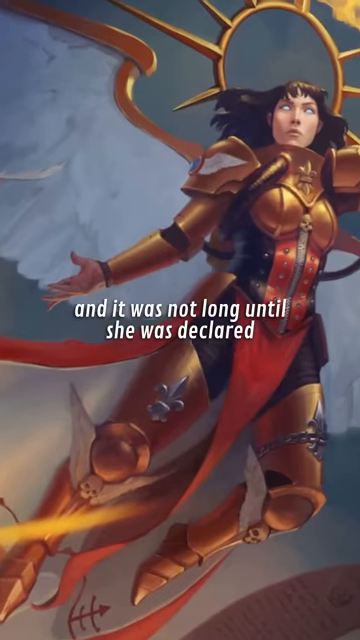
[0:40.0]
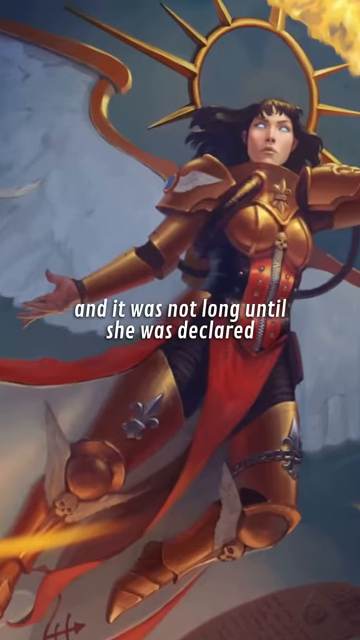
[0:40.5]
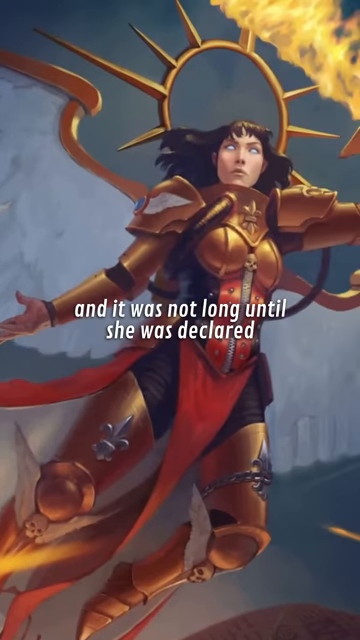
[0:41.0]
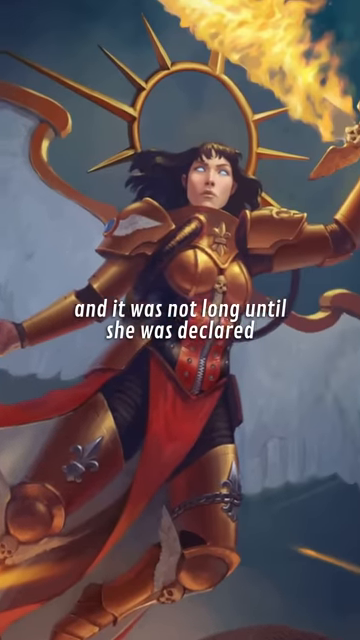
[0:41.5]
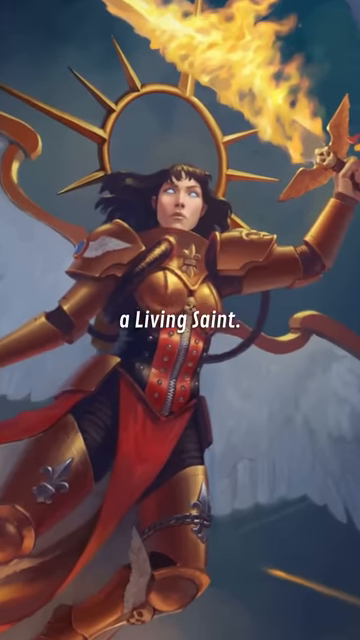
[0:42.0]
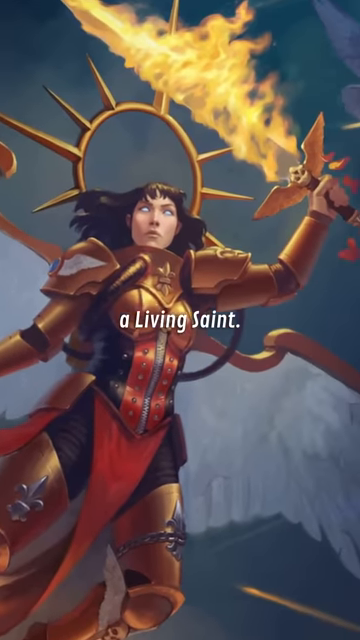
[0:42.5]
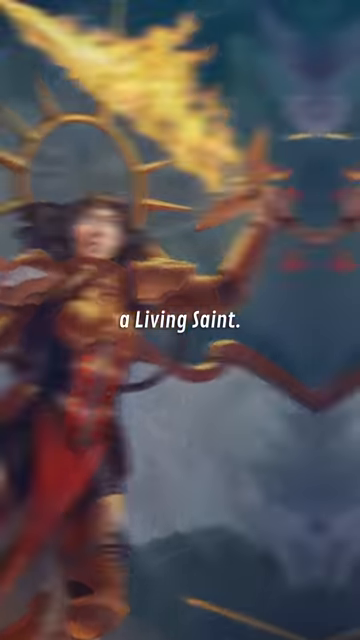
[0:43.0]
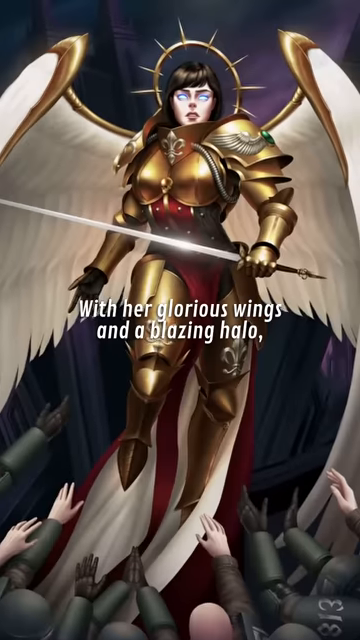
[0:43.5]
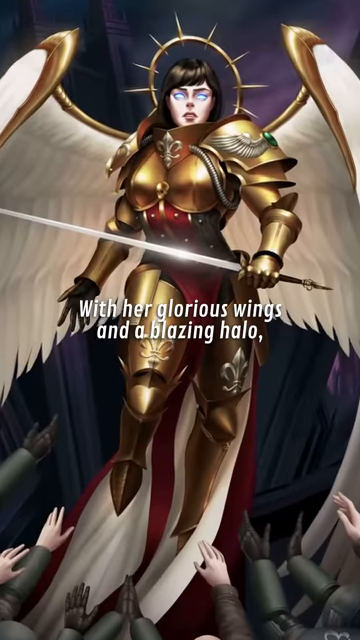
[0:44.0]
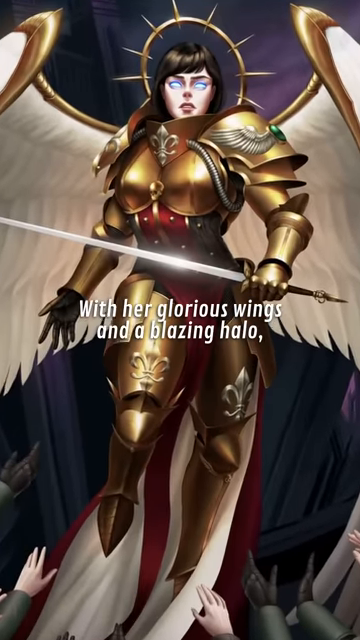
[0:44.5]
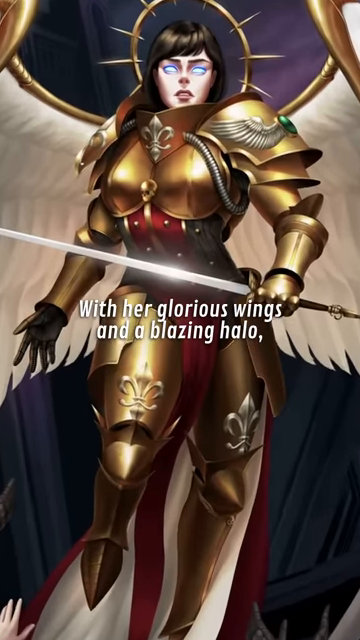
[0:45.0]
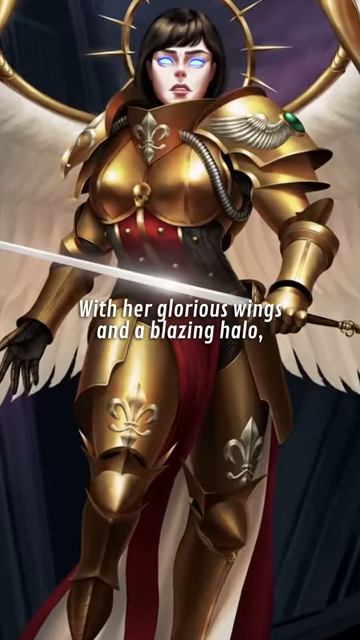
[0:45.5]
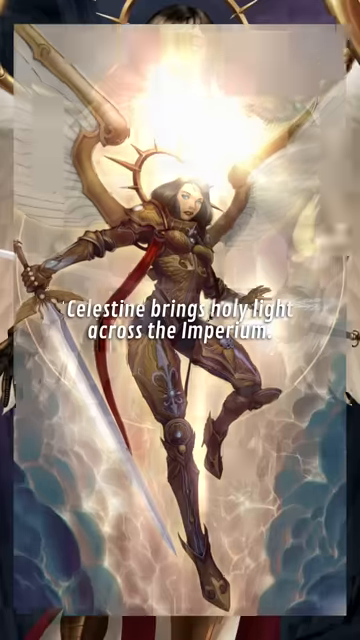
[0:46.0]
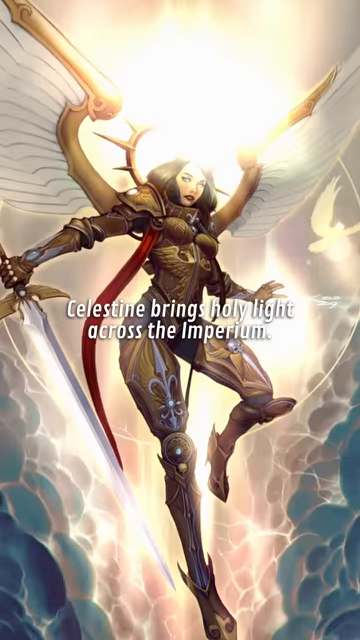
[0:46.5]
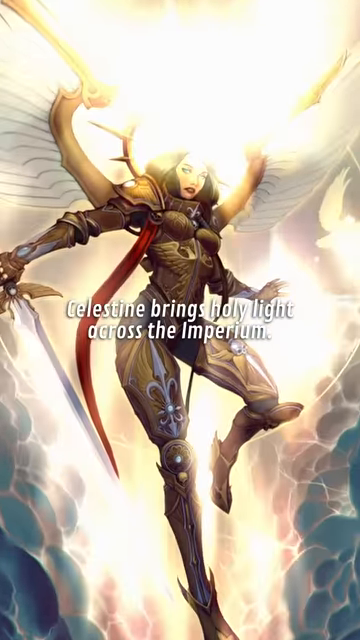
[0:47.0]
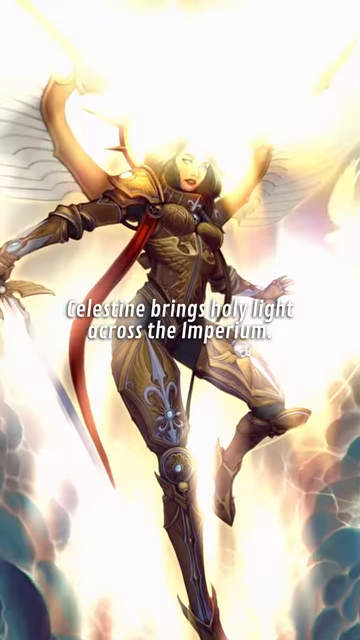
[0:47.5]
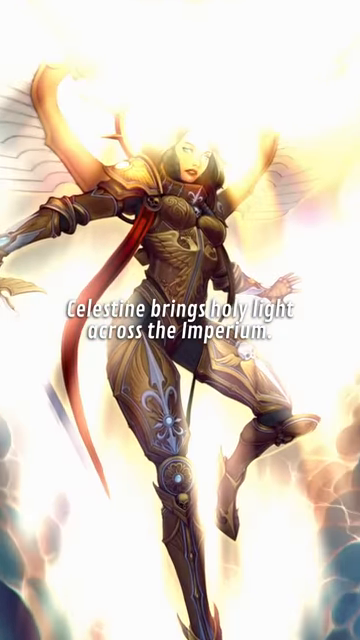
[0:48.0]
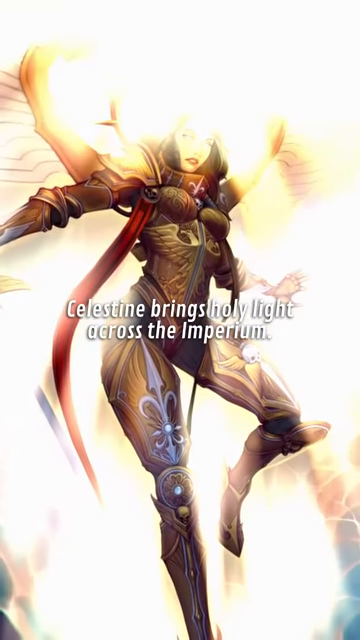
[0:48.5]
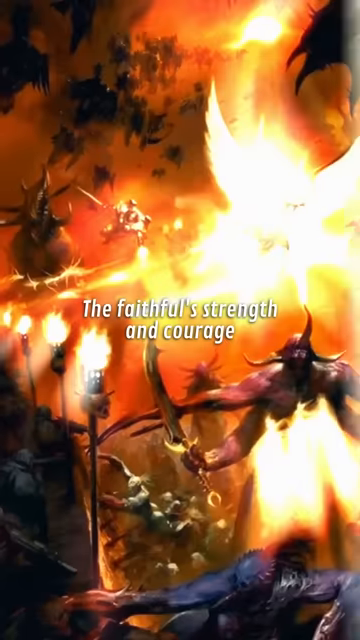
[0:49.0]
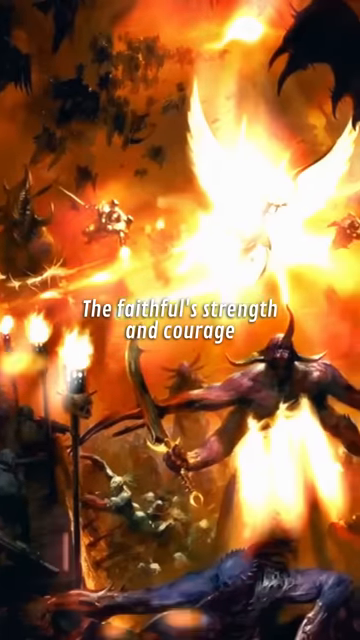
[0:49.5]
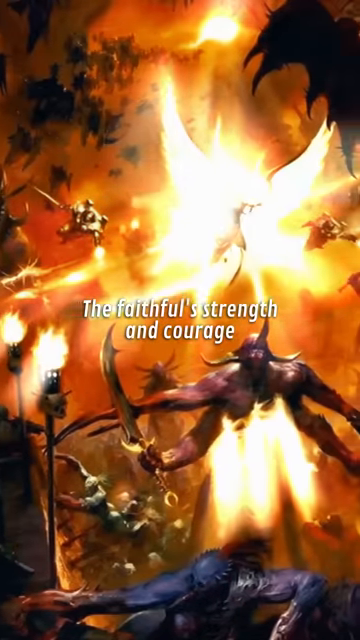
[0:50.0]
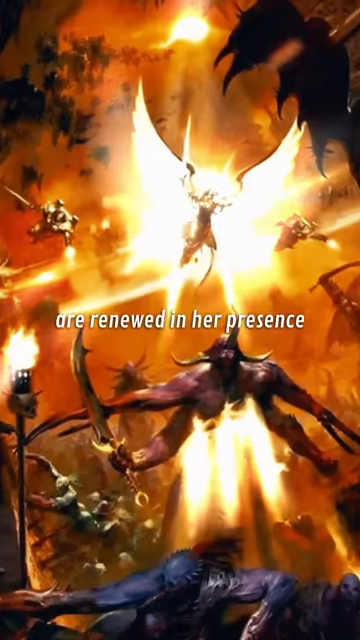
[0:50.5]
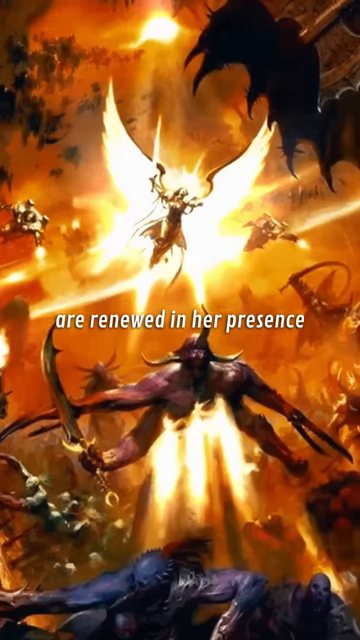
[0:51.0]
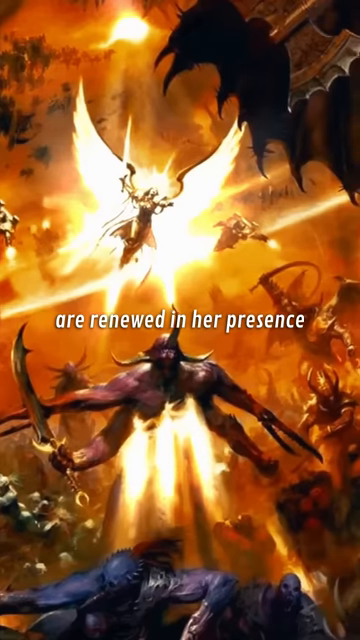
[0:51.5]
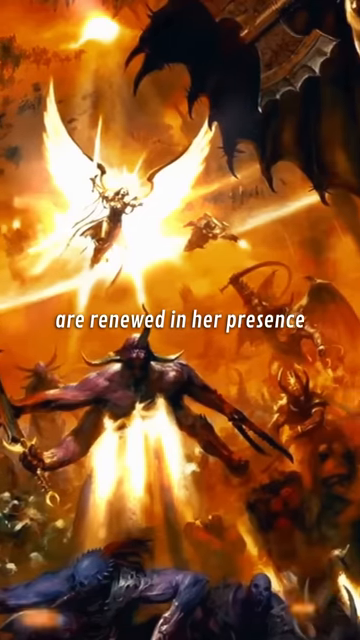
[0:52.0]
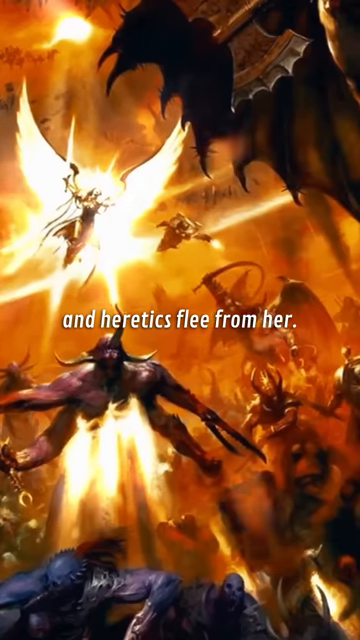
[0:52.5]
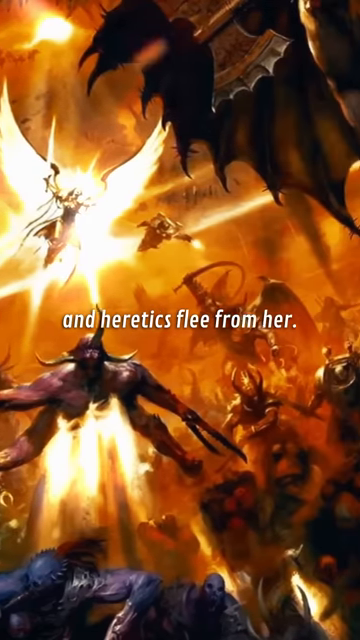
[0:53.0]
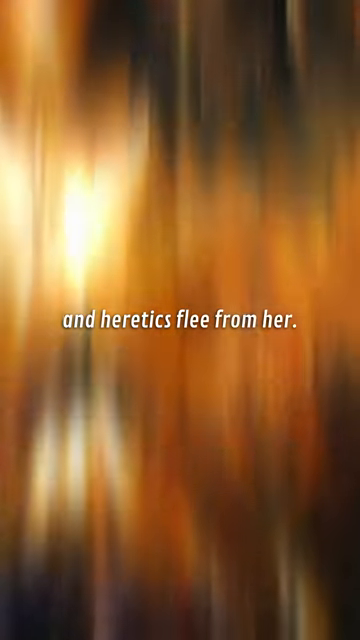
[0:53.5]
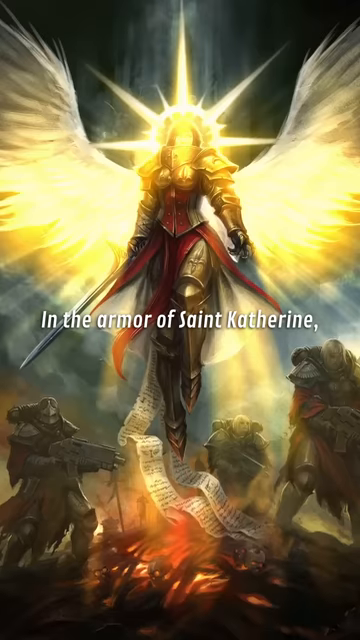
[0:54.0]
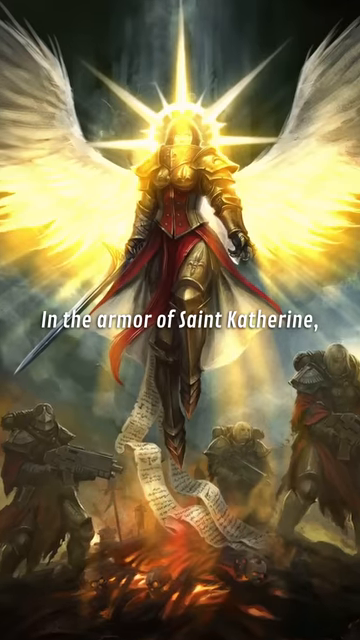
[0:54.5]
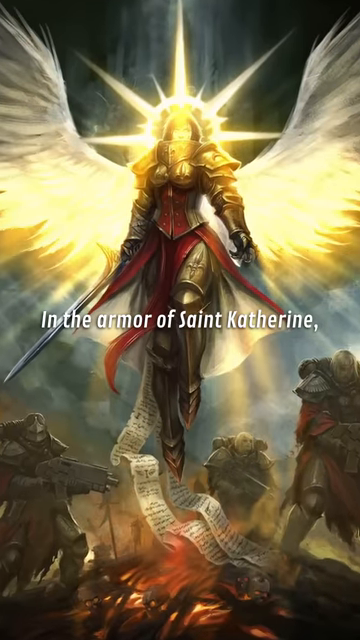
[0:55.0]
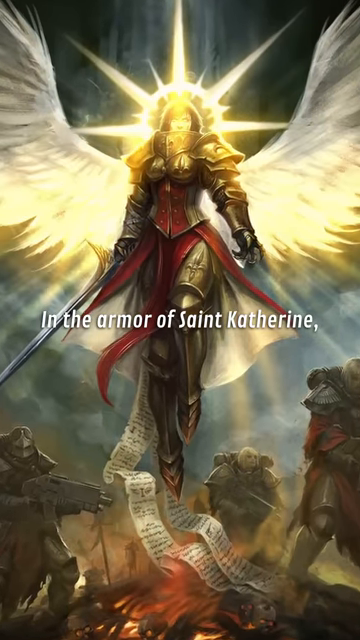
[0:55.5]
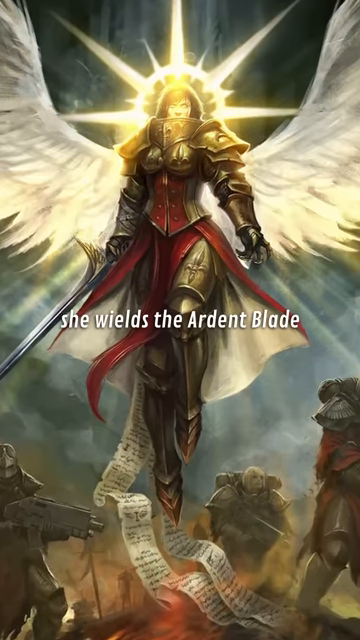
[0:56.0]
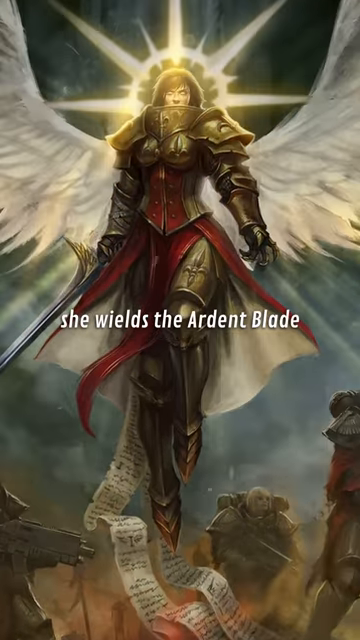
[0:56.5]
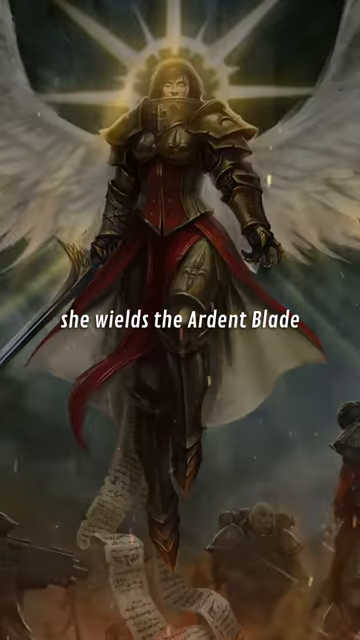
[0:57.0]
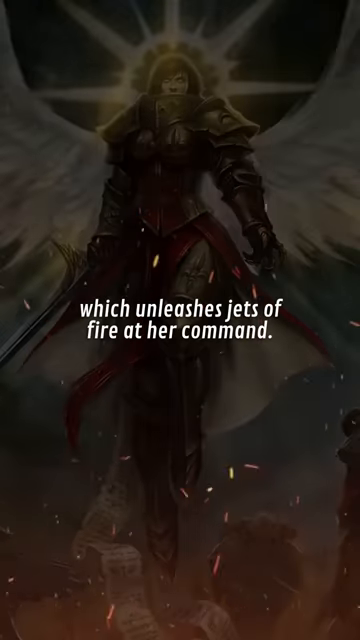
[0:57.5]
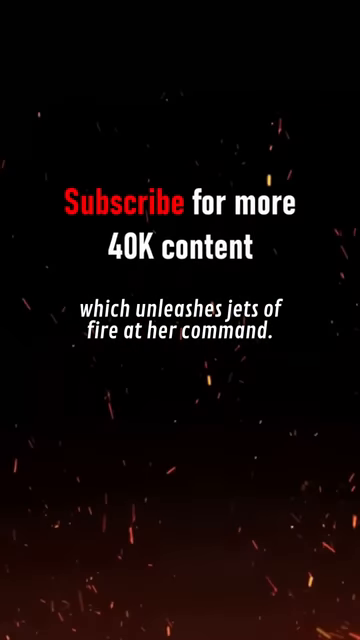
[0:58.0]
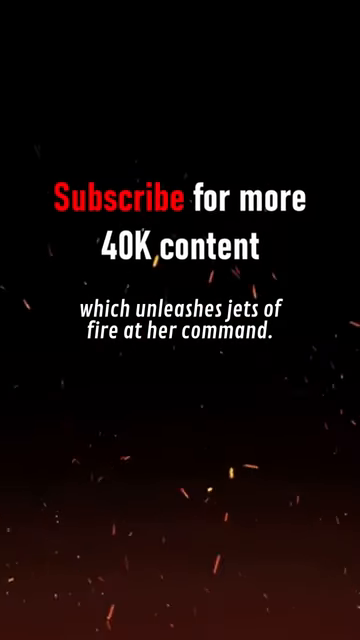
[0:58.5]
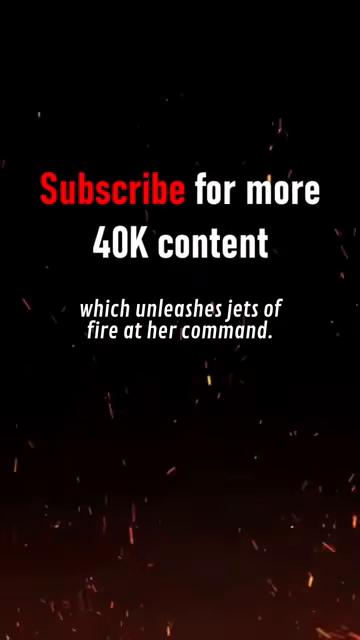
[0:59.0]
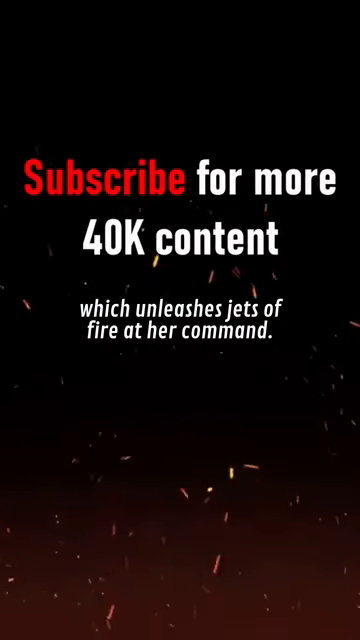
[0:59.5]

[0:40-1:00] What appears to be an angel-esque woman is presented, with two white wings whose outer layers appear to be a goldish color. She has a very bright halo behind her, all-white eyes, and long black hair. She appears to be wearing gold-plated armor, and her leg plates are plated with what appear to be skulls with wings around her kneecaps. She wields a very long flaming sword with a skull with wings toward the center of the handle and long flames coming from the middle. White text reads "a living saint" and "with her glorious wings and a blazing halo." Another character has a halo effect, a white skin tone, goldish shoulder pads and goldish leg plates. Several arms are drawn to her, reaching out. Toward the end, another image shows a figure similar to this individual, now fighting demons and evil creatures.